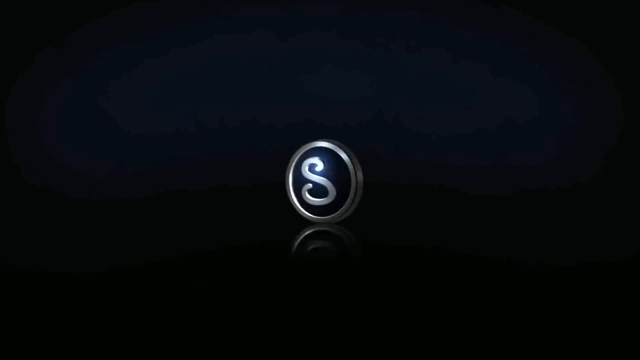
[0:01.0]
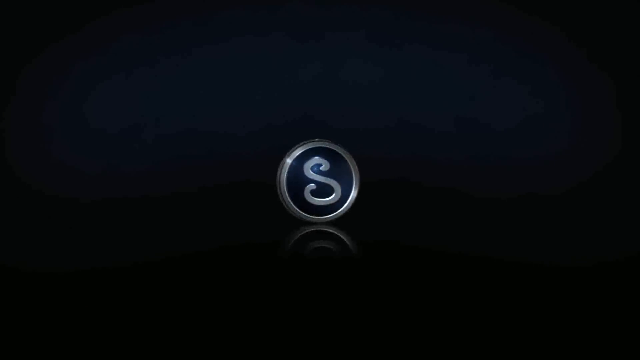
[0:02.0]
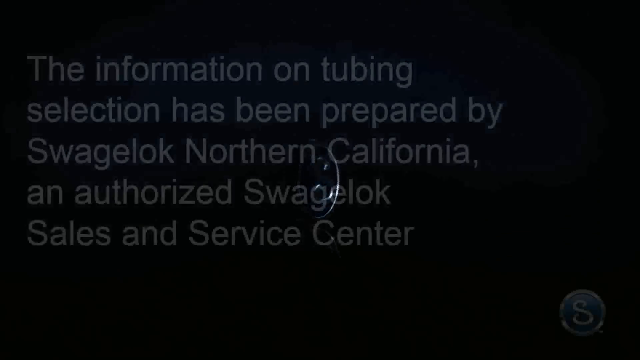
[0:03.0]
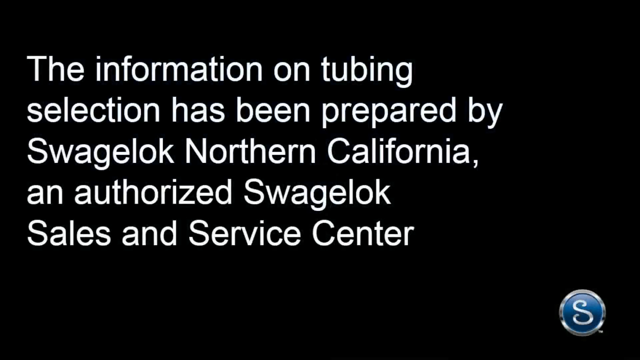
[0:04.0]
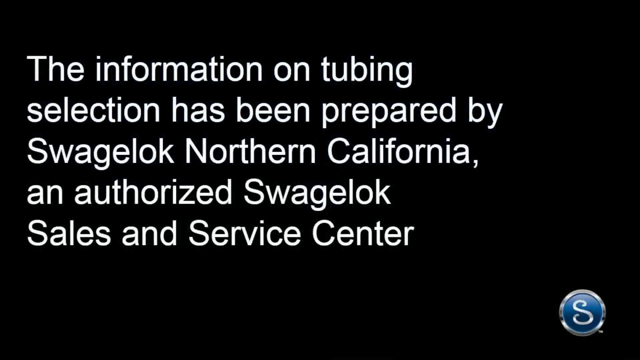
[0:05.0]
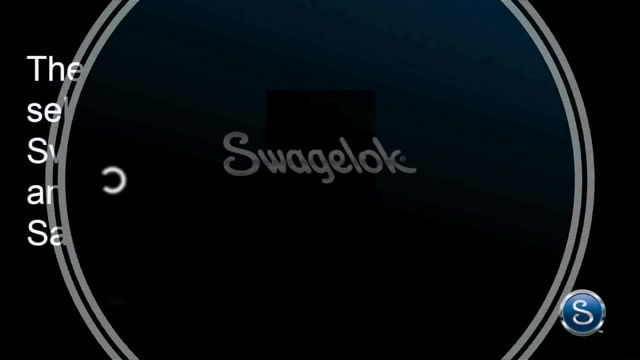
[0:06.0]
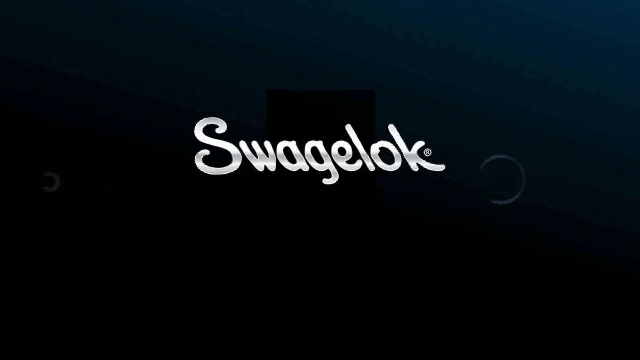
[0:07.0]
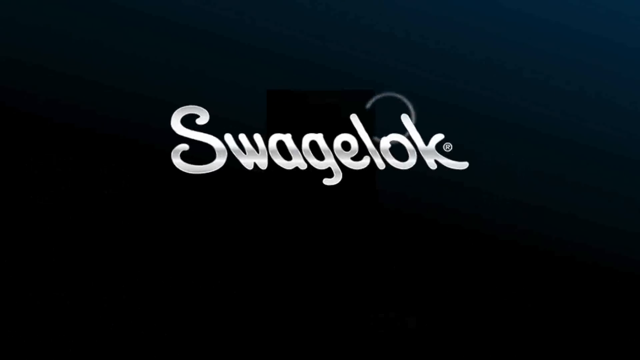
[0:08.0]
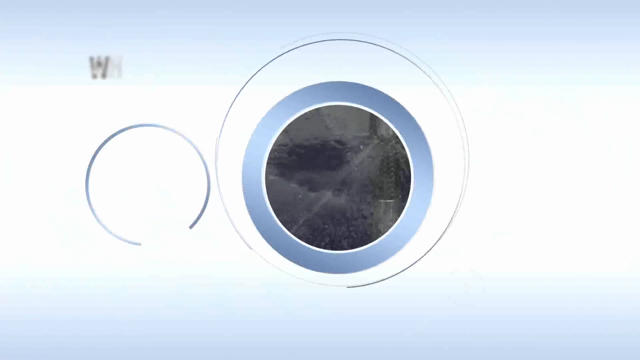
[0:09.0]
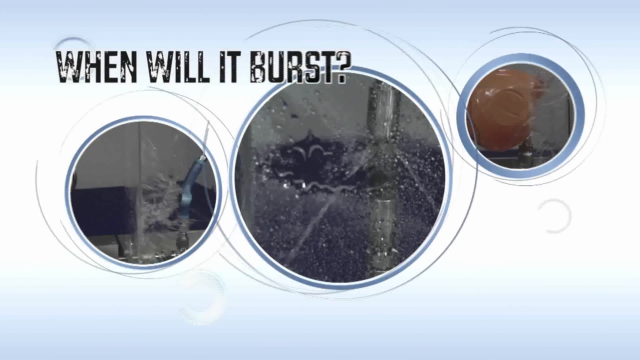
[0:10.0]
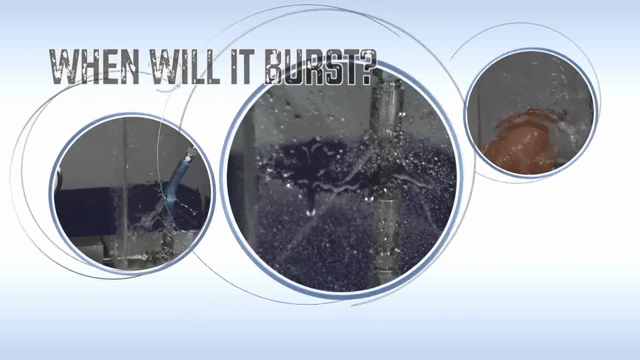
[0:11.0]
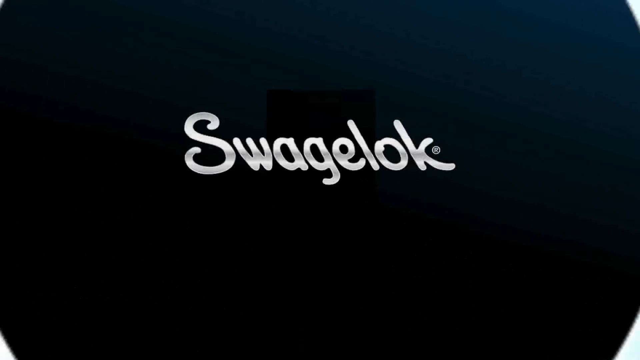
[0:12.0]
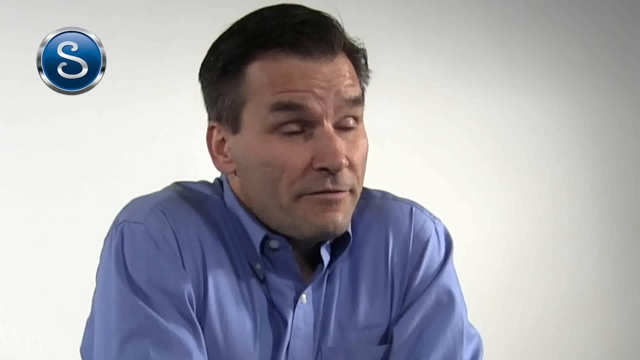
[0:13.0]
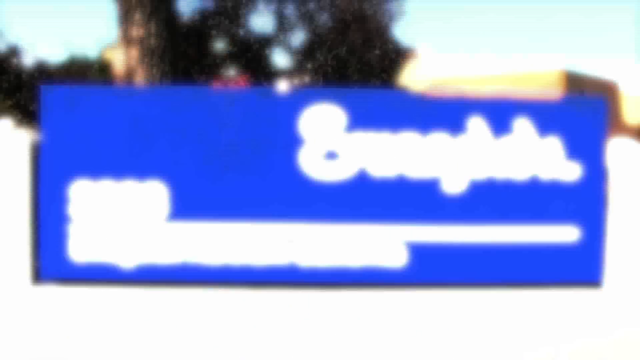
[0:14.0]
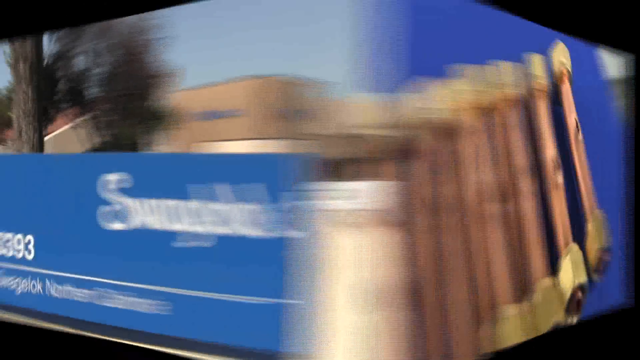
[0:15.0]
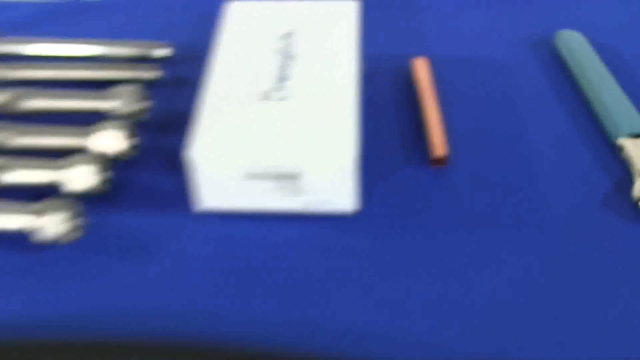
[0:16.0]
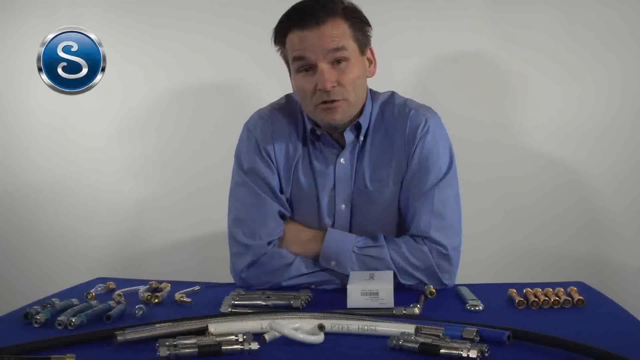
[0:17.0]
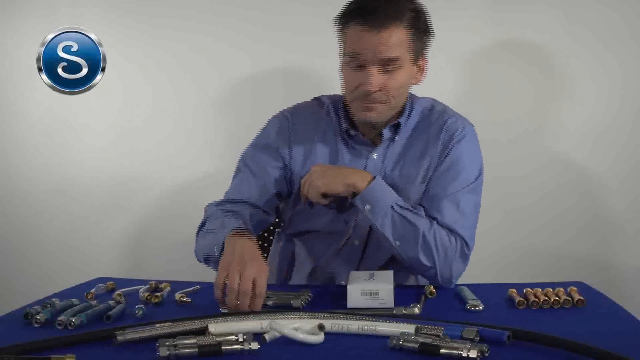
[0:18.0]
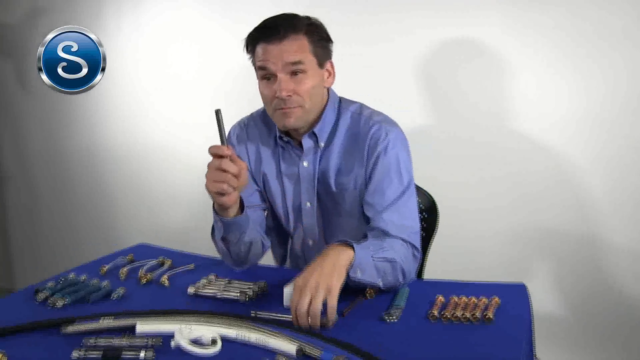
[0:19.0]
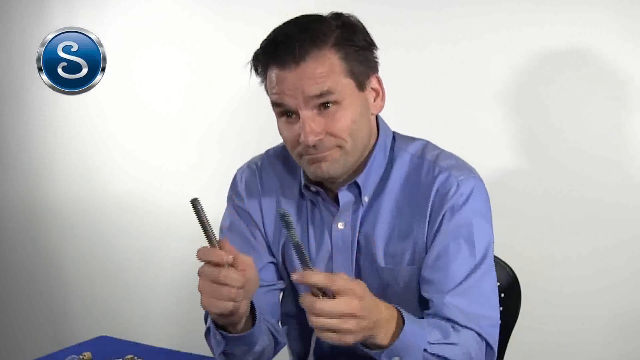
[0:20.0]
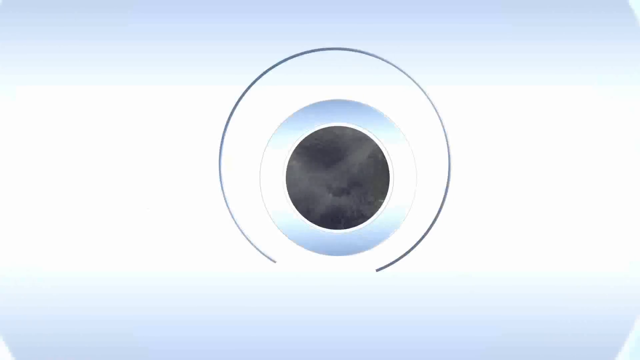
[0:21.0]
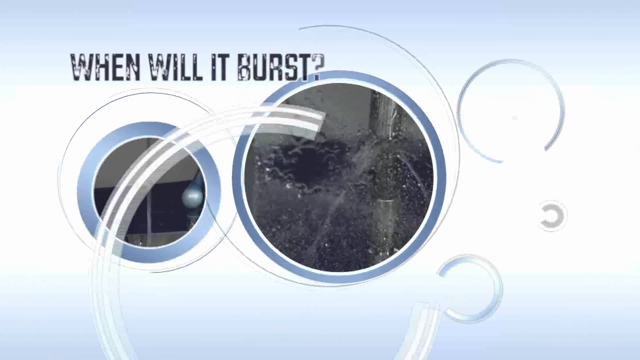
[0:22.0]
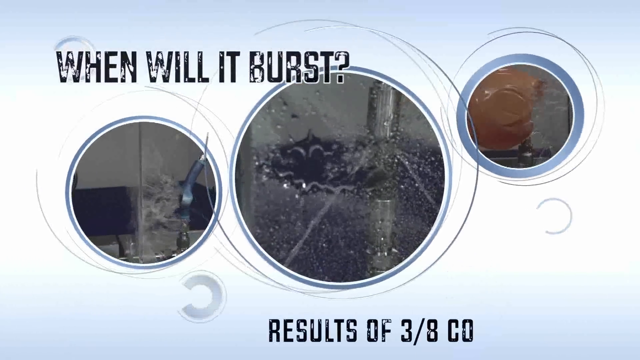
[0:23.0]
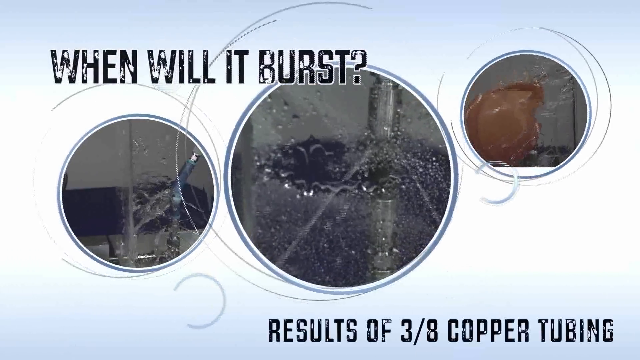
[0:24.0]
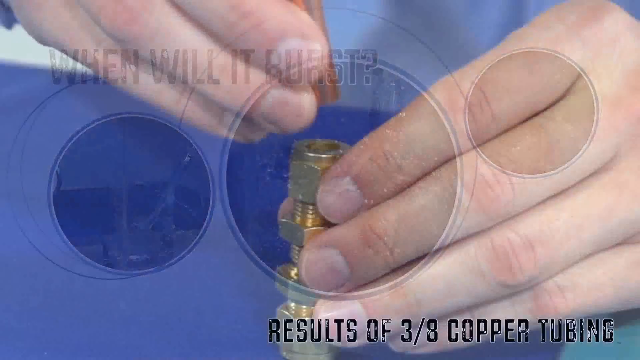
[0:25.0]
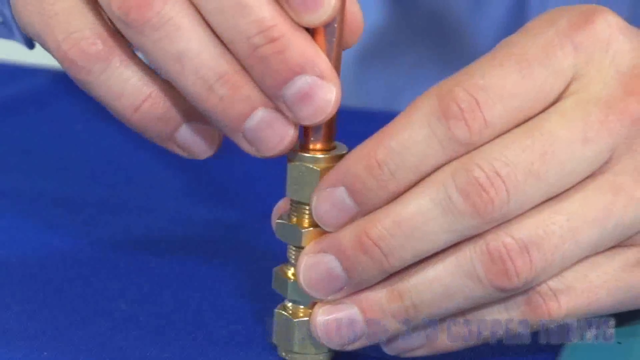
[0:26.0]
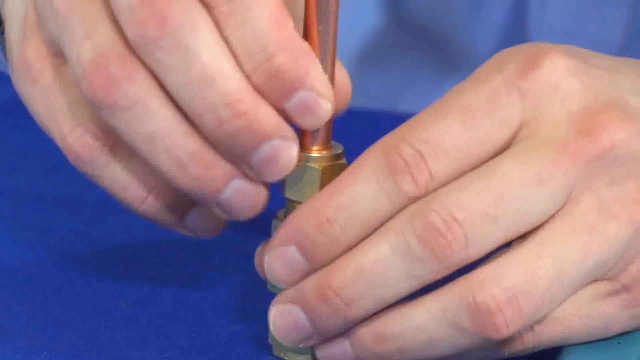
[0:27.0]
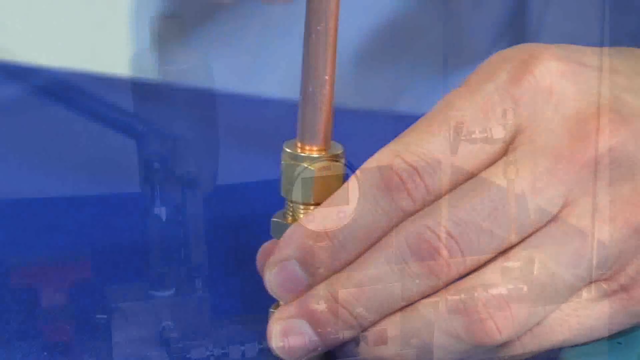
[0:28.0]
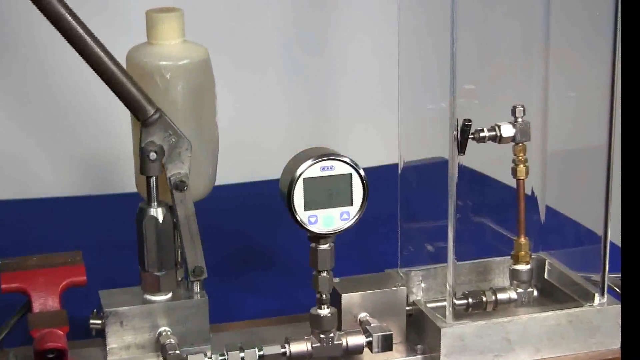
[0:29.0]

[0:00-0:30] The video opens with a logo that looks like a letter S spinning, with a circle around it. White text on a black screen then reads: "The information on tubing selection has been prepared by Swagelok Northern California, an authorized Swagelok sales and service center." The Swagelok logo appears next. Pictures of pipes follow with the text "when will it burst?", and there appear to be three different videos of pipes spraying water everywhere, apparently showing what happens when the pipes burst. A man in a blue collared shirt sits at a table with a bunch of plumbing fittings in front of him. Next comes what looks to be the company's headquarters, with a sign reading "Swagelok"; the address reads "3393", and below that it says "Swagelok Northern California". A fast cut image then shows the plumbing fittings sitting on the table.